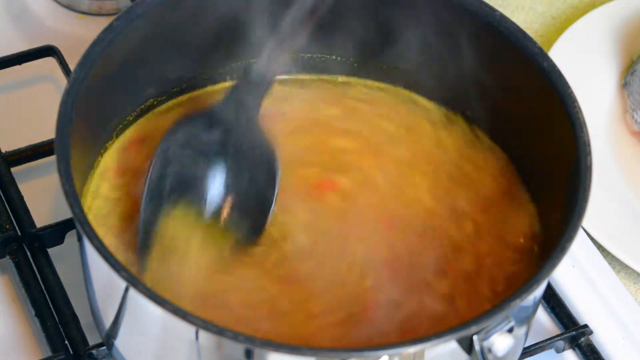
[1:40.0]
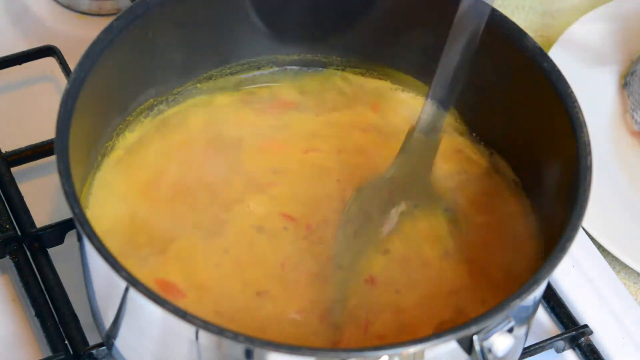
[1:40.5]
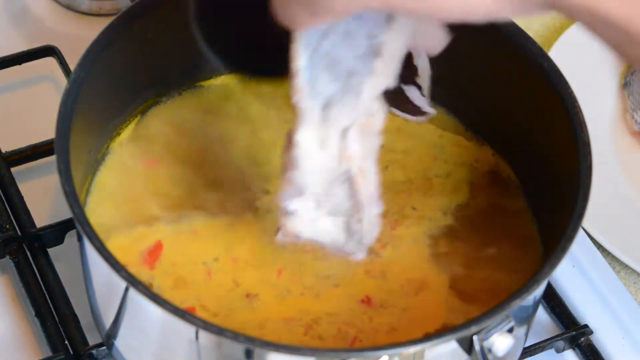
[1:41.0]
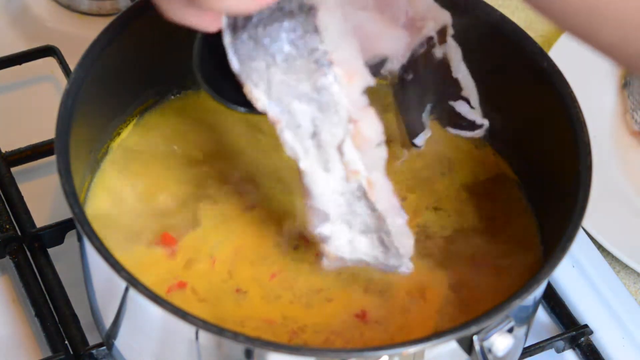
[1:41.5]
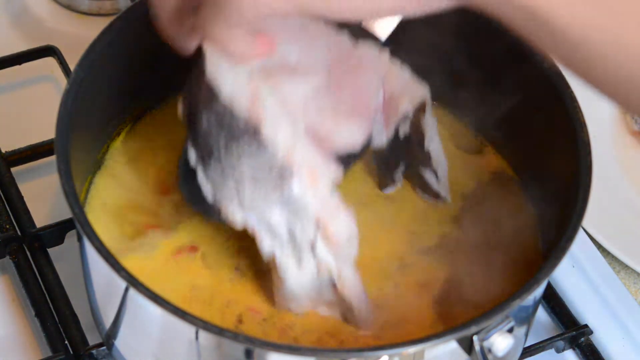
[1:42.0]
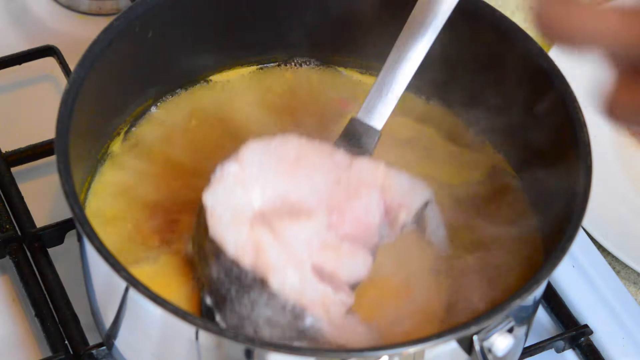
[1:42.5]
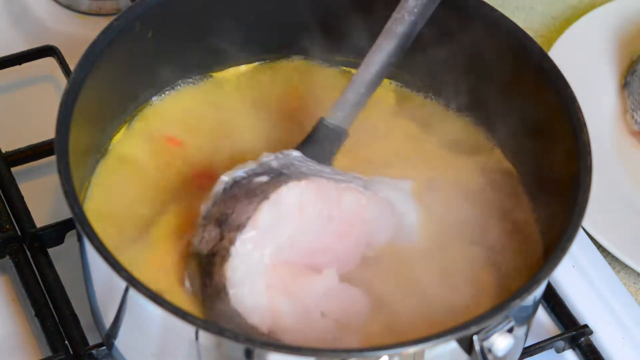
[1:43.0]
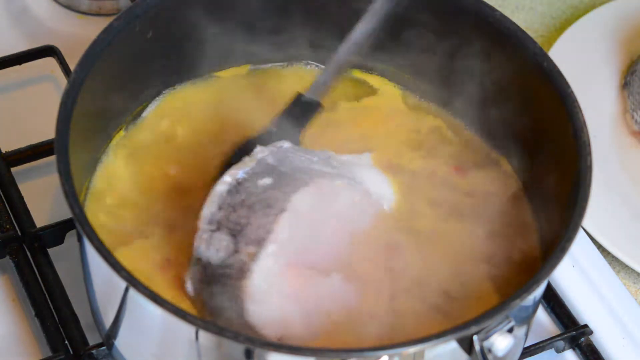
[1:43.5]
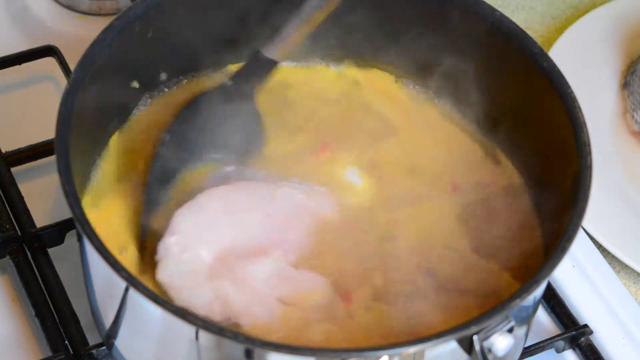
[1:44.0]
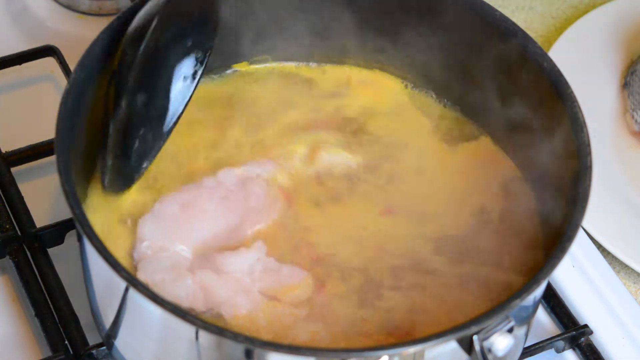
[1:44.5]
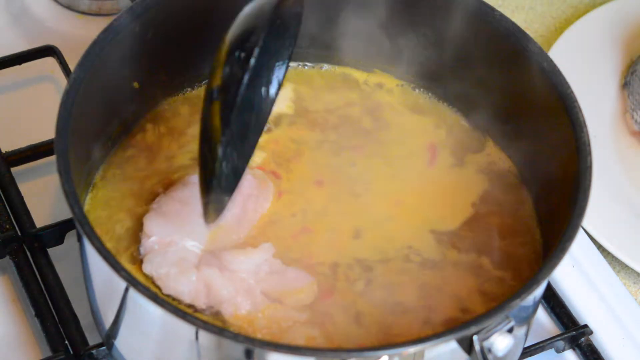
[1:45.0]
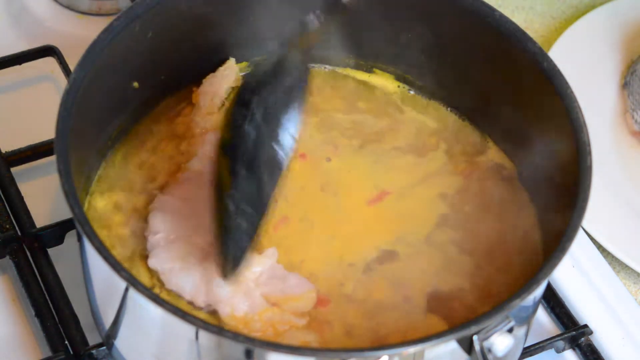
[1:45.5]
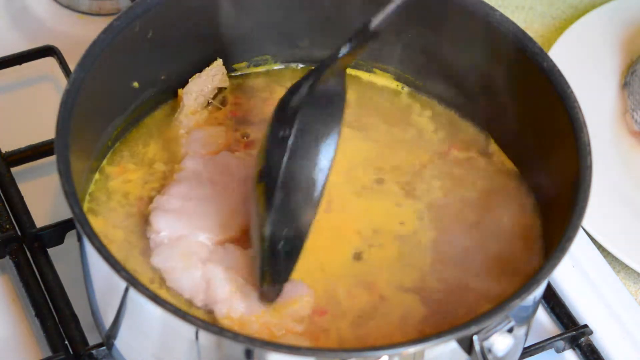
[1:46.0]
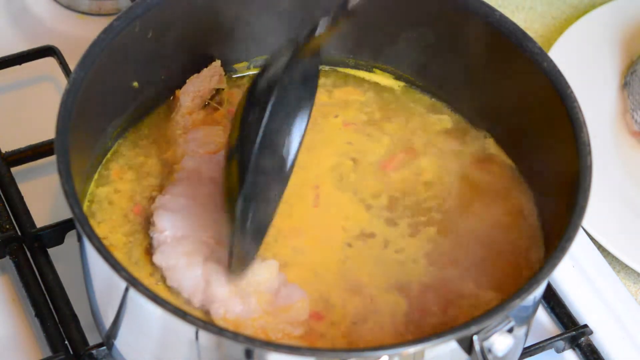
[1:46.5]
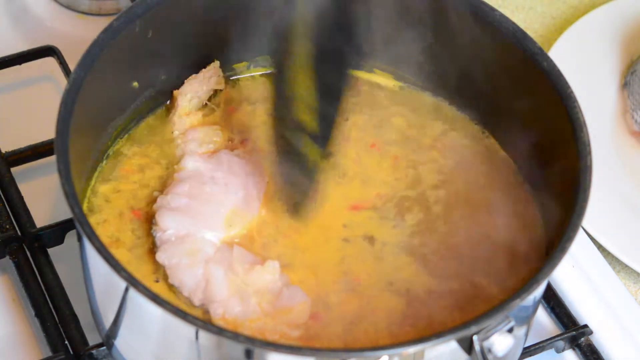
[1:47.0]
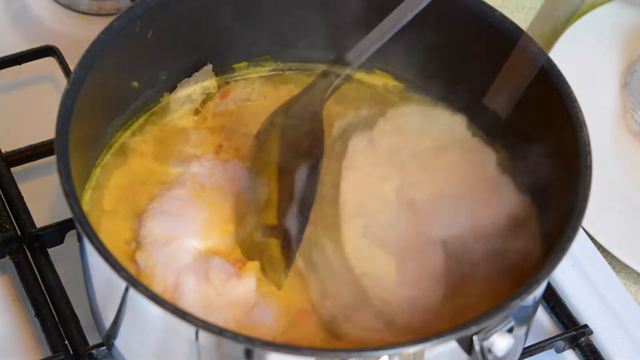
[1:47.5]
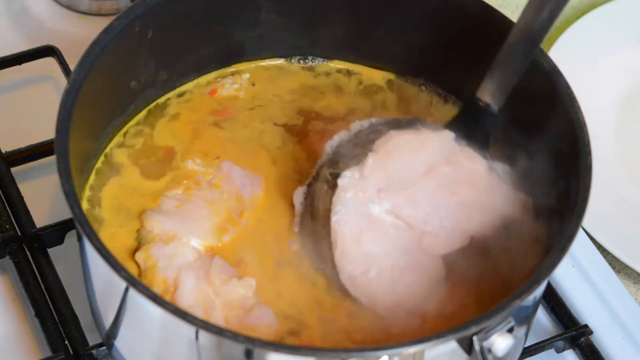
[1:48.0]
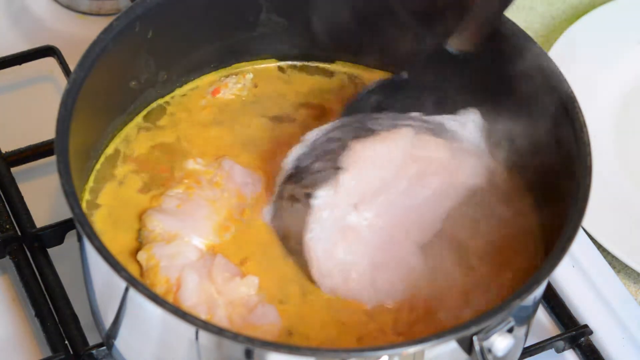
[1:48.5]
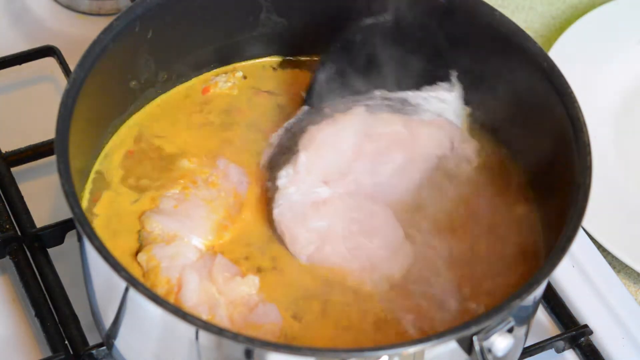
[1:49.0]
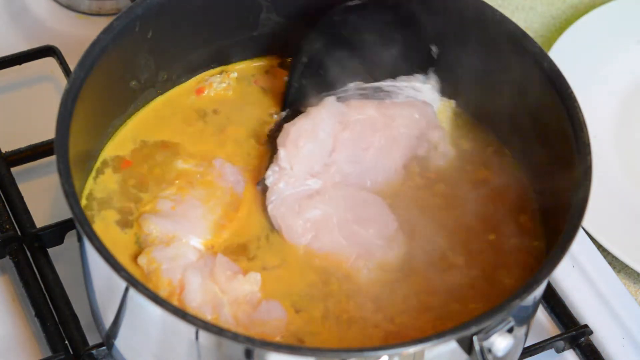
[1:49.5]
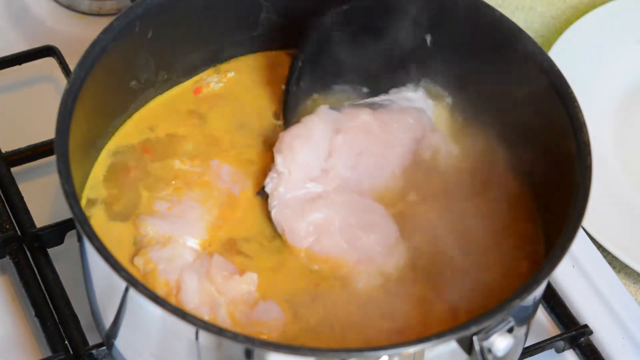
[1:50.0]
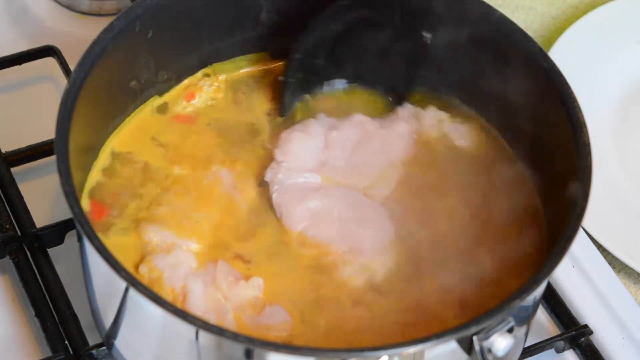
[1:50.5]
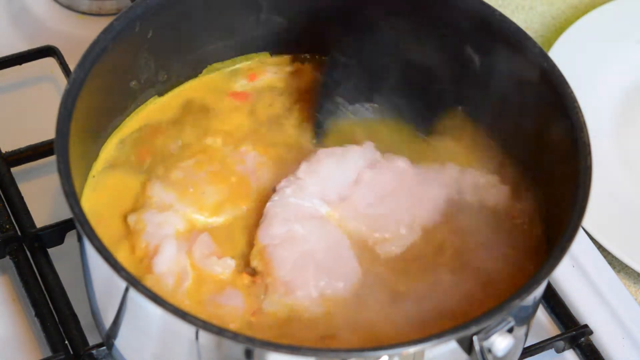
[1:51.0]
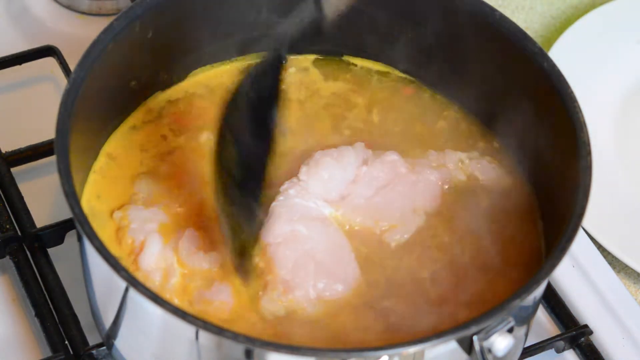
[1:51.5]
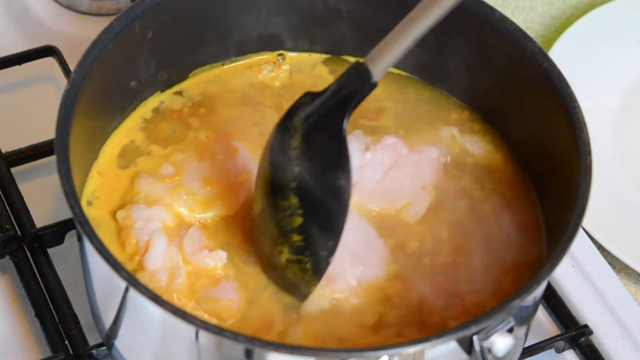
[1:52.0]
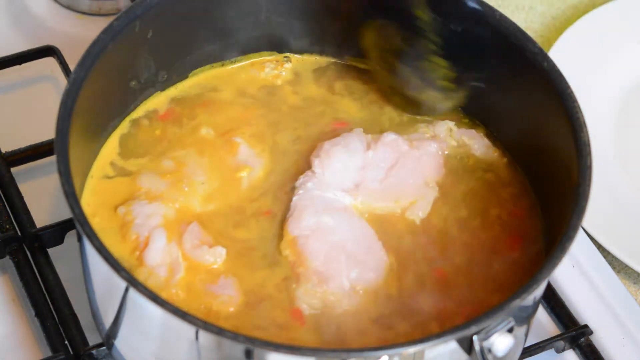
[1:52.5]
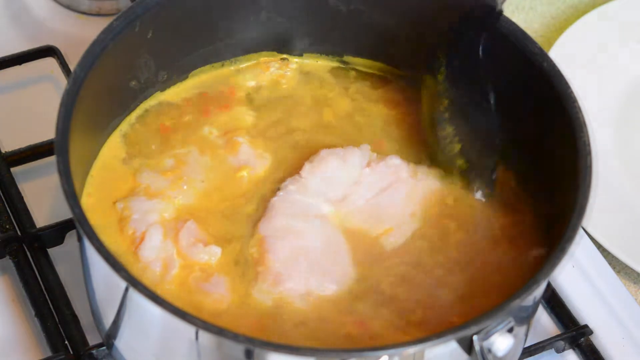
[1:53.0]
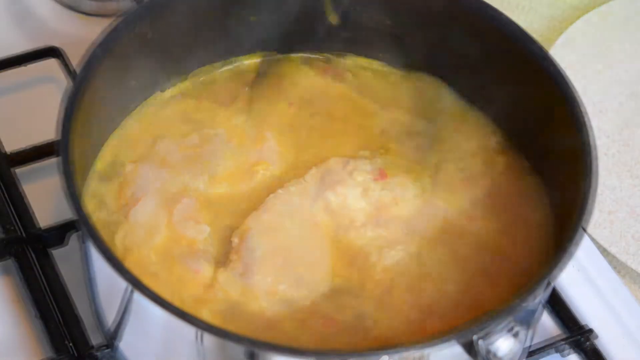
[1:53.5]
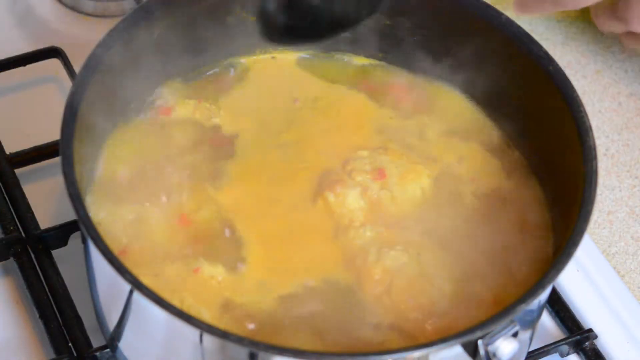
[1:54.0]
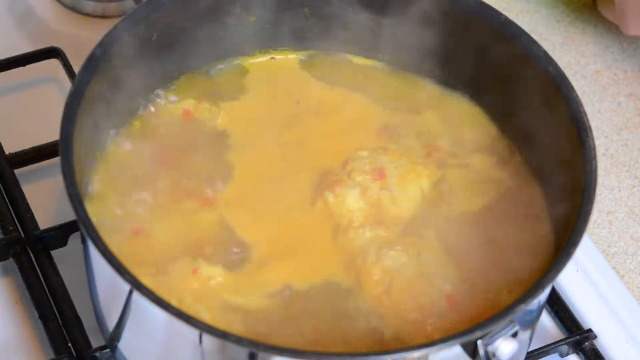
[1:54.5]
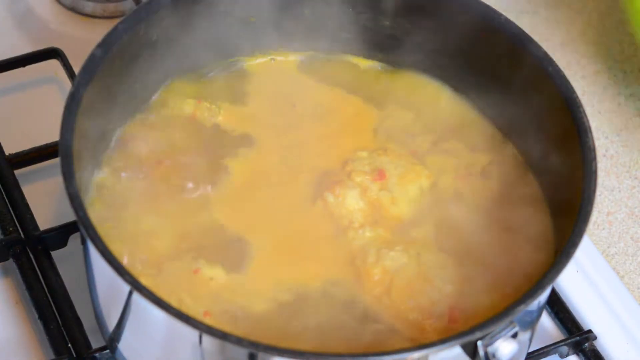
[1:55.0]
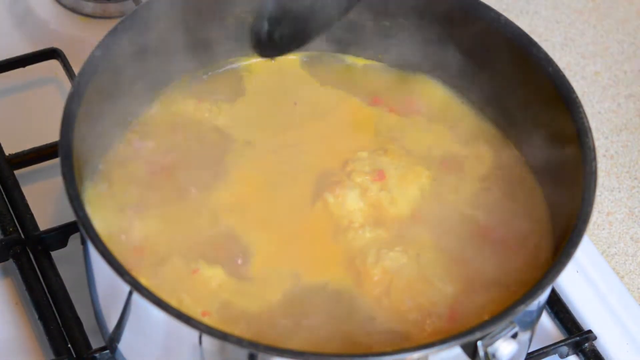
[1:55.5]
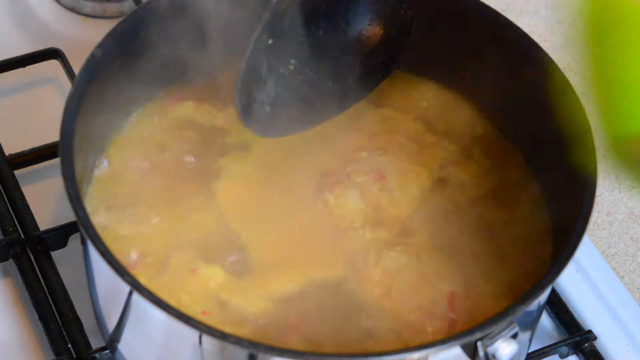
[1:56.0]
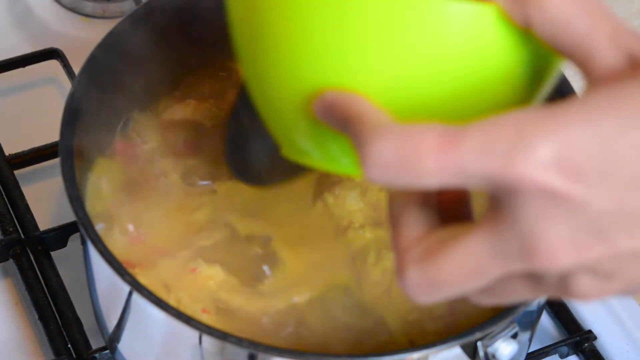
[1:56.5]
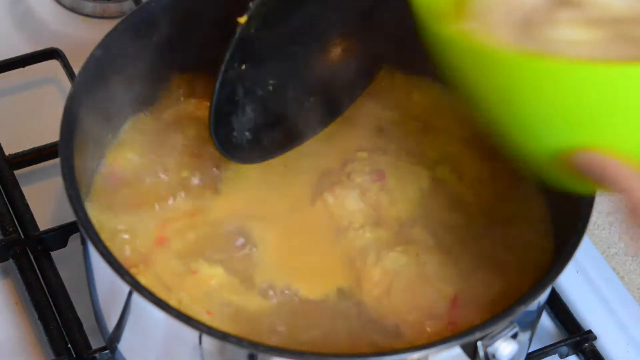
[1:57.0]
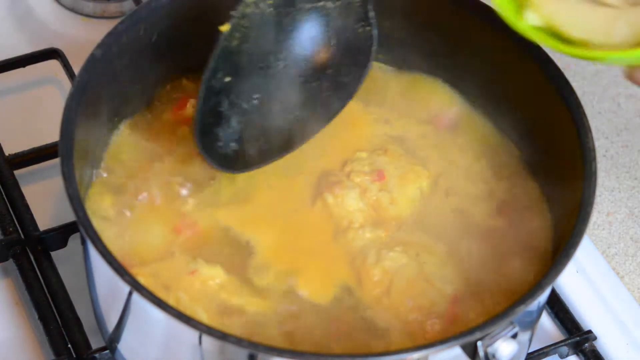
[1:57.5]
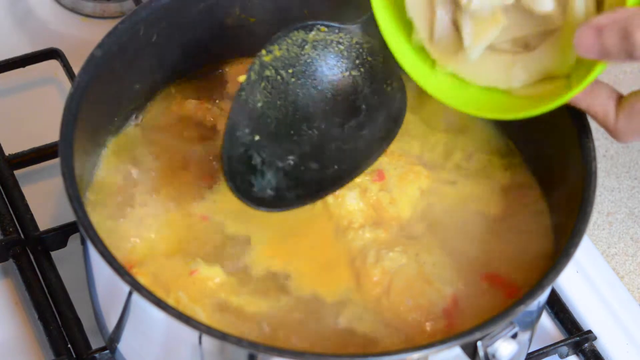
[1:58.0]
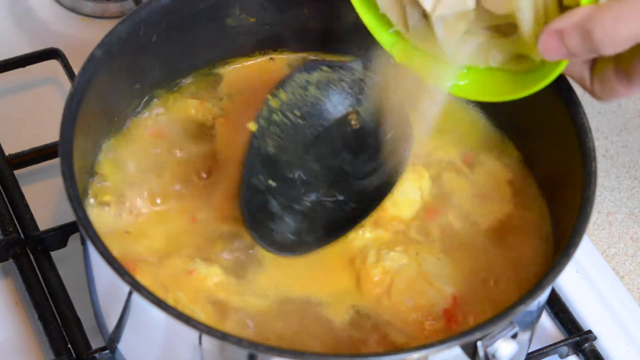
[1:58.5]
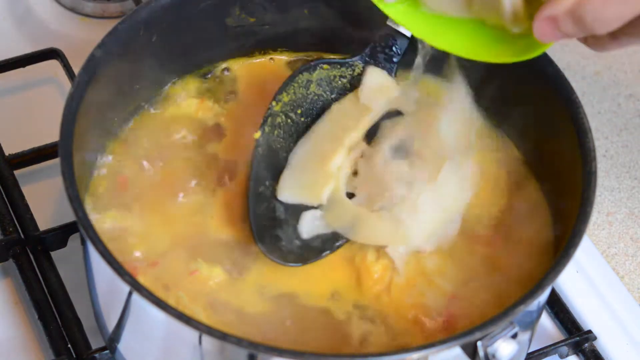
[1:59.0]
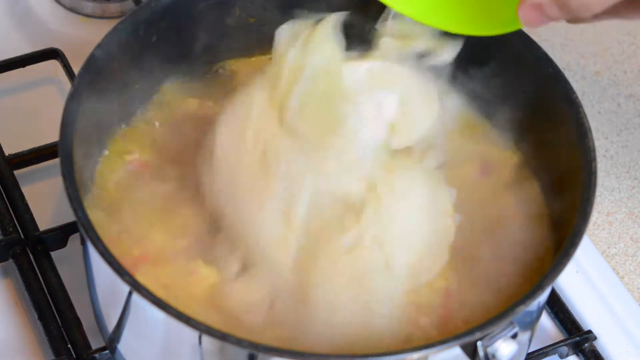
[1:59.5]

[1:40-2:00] A silver pot, black on the inside and silver on the outside, holds a soup that is cooking, and a black and silver spoon keeps stirring it. A piece of fish is put into the boiling sauce in the pot, then set aside, then another fish is put in while it keeps boiling, and another item is put on top of the fish. The sauce or stew becomes yellow.